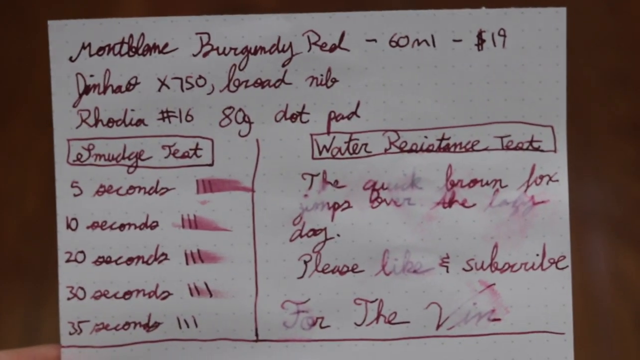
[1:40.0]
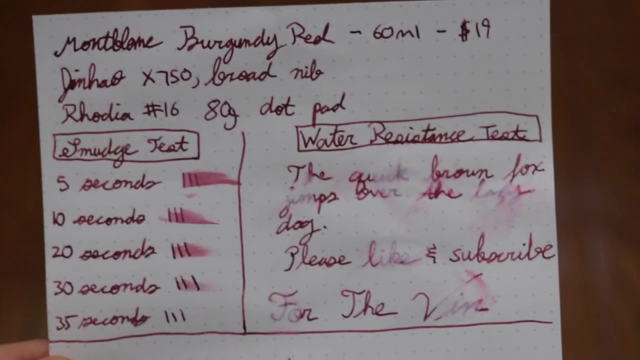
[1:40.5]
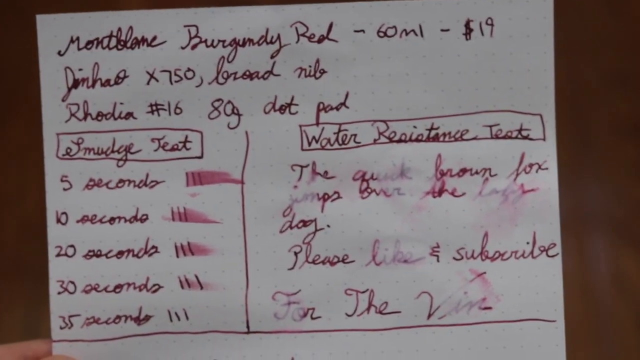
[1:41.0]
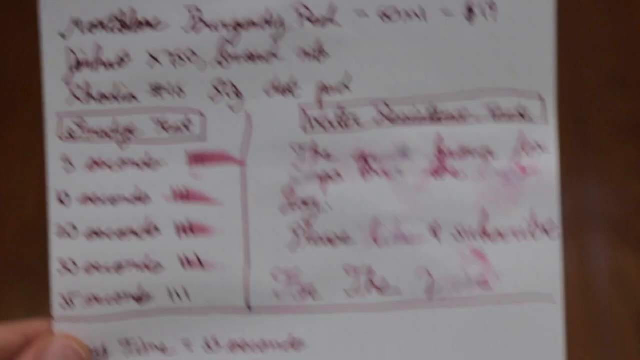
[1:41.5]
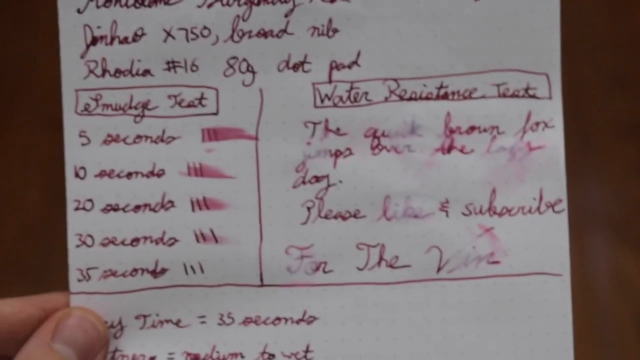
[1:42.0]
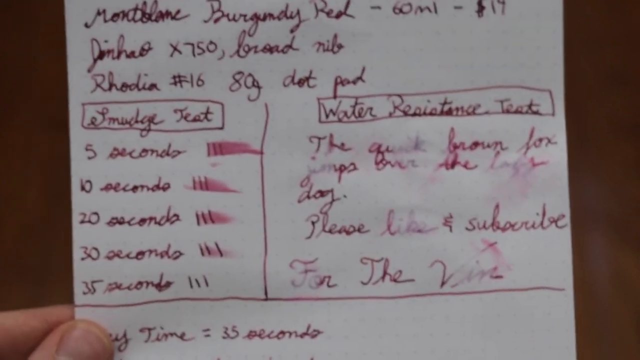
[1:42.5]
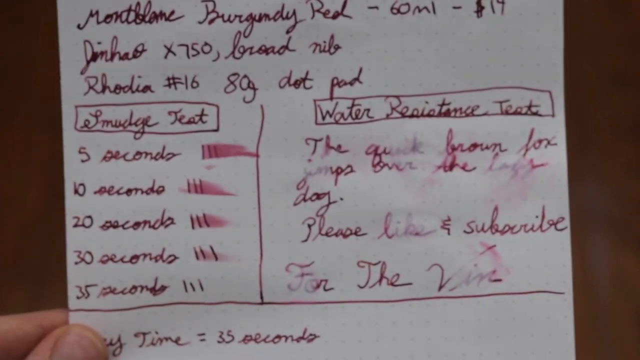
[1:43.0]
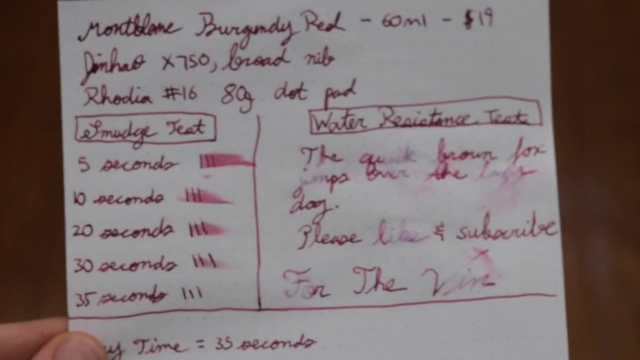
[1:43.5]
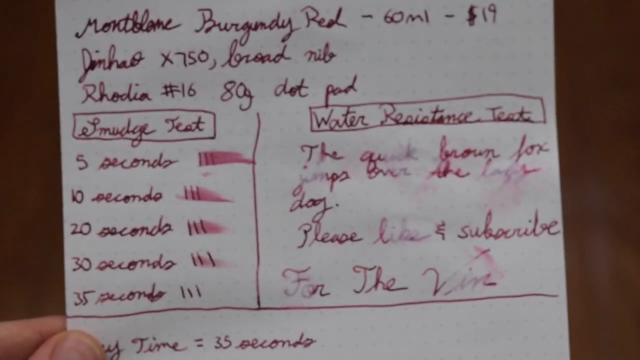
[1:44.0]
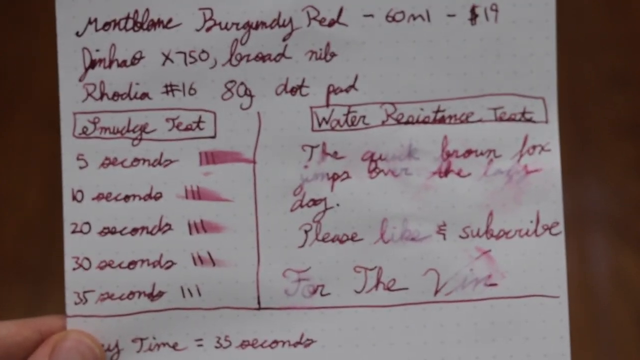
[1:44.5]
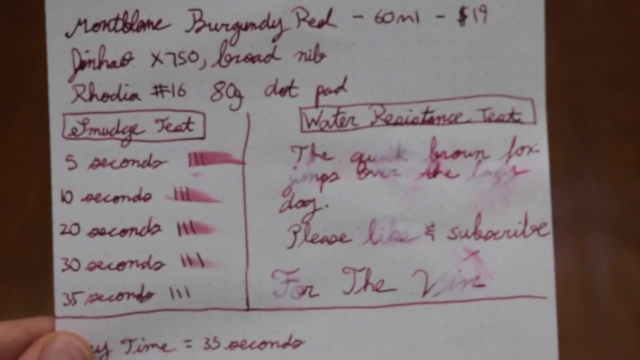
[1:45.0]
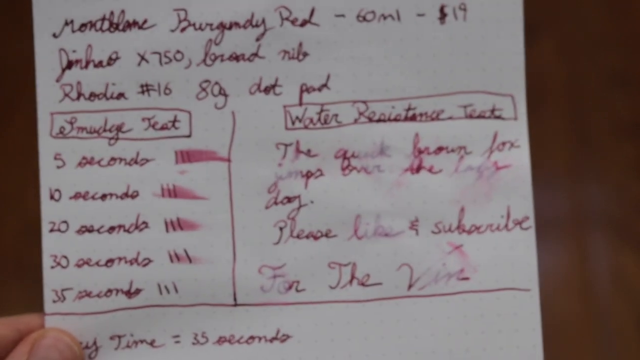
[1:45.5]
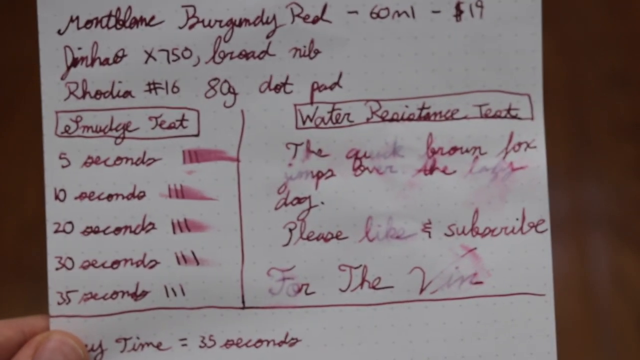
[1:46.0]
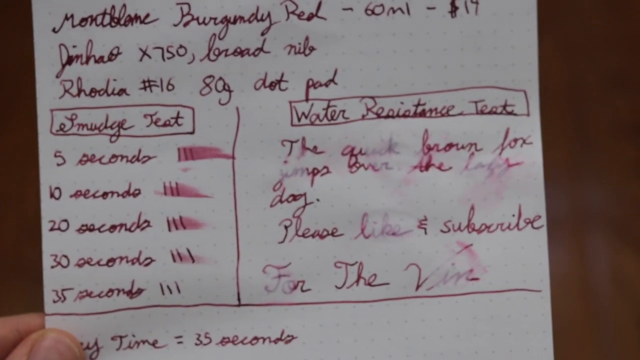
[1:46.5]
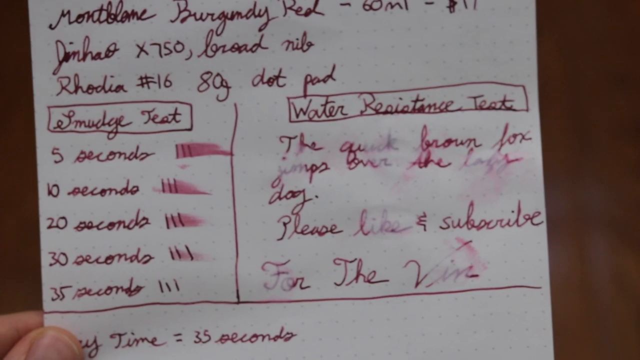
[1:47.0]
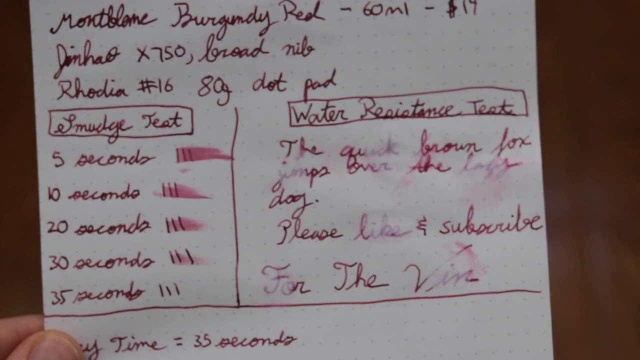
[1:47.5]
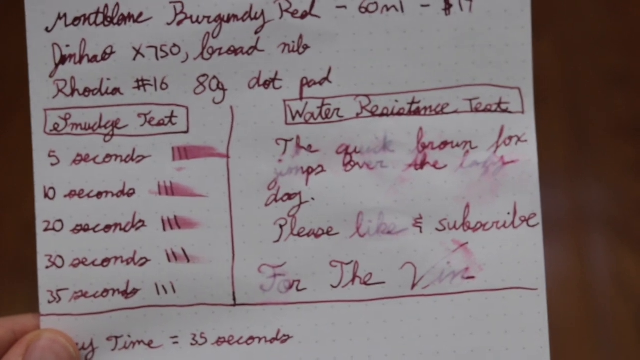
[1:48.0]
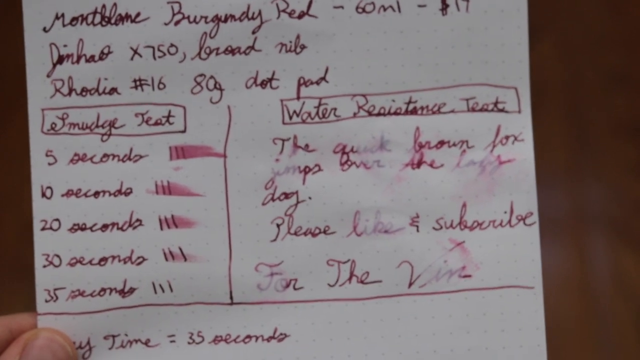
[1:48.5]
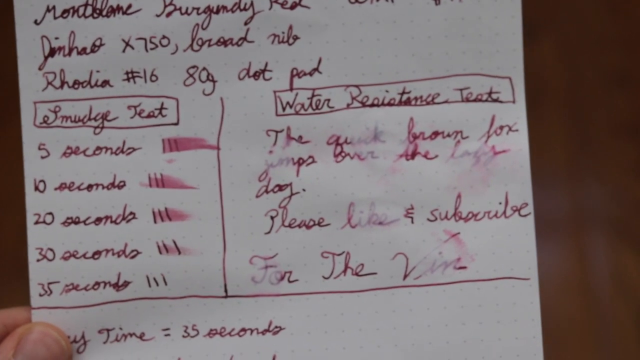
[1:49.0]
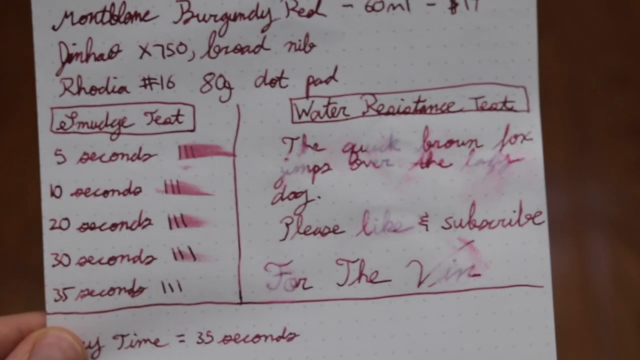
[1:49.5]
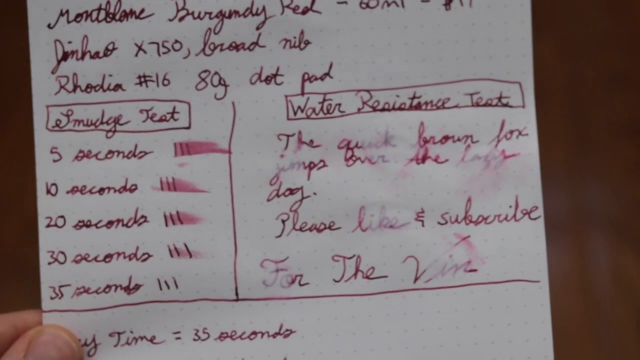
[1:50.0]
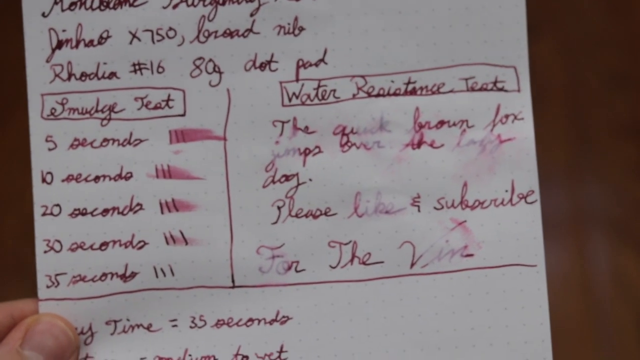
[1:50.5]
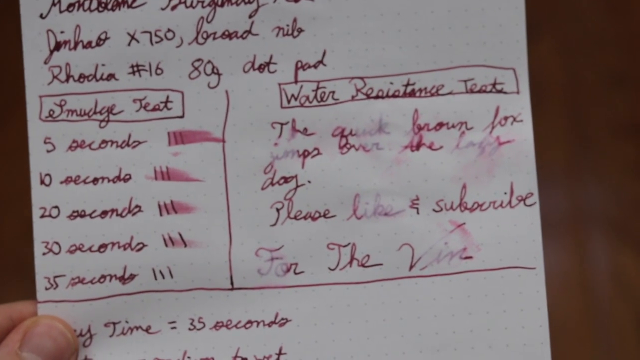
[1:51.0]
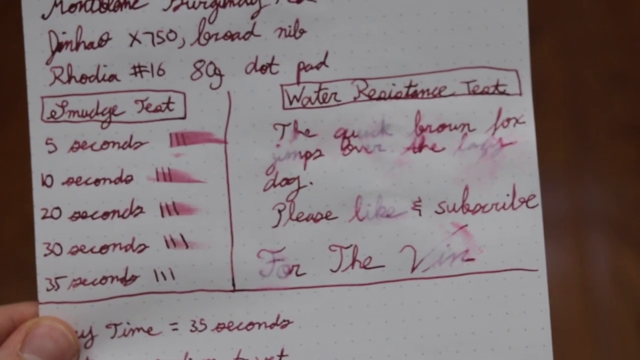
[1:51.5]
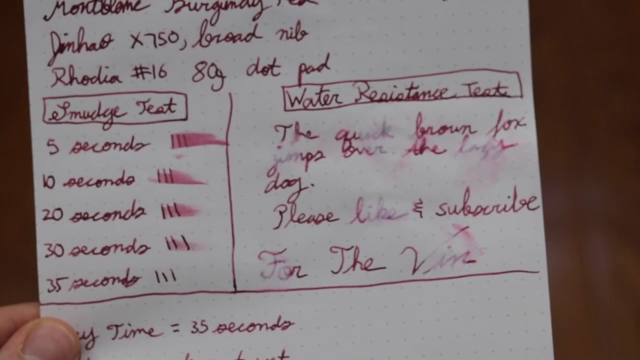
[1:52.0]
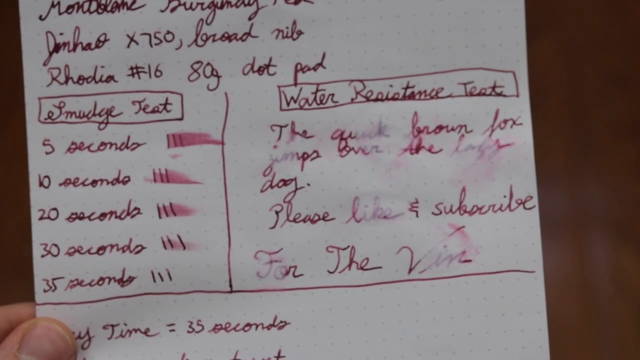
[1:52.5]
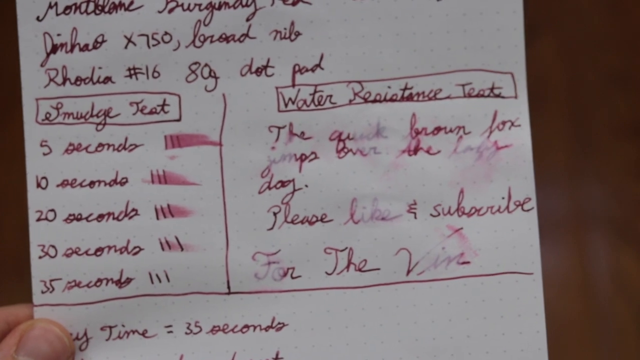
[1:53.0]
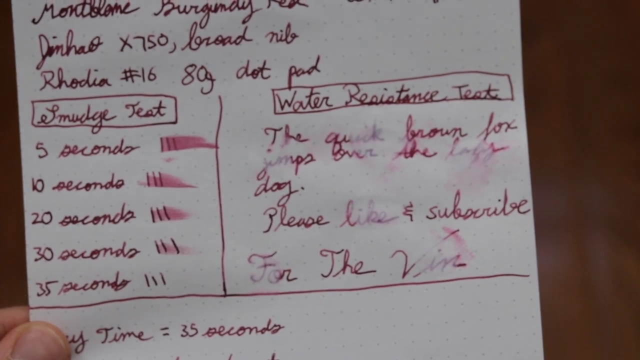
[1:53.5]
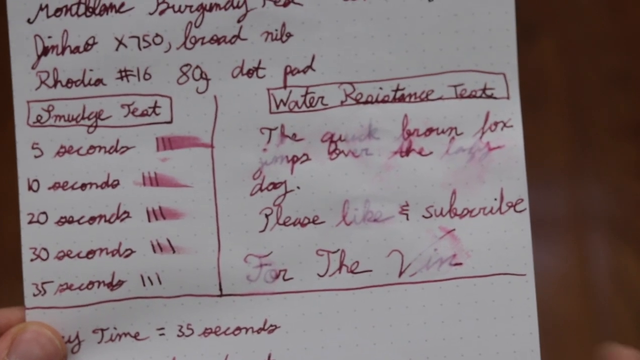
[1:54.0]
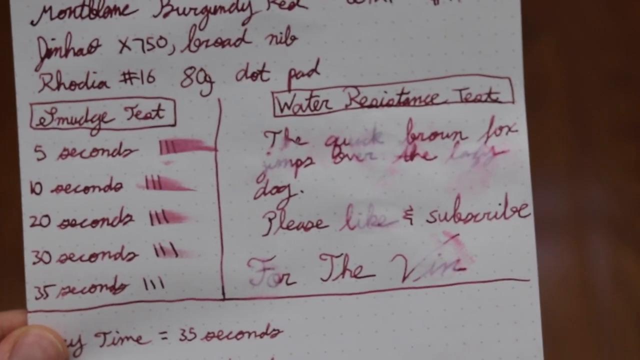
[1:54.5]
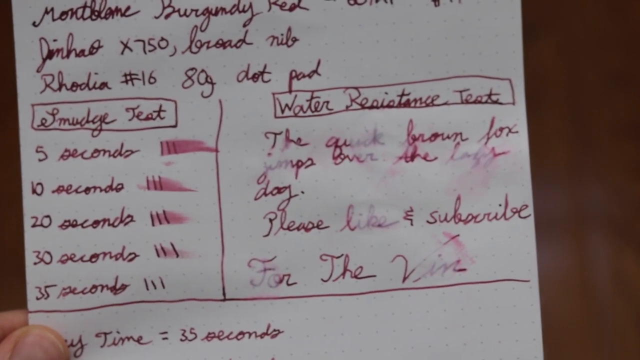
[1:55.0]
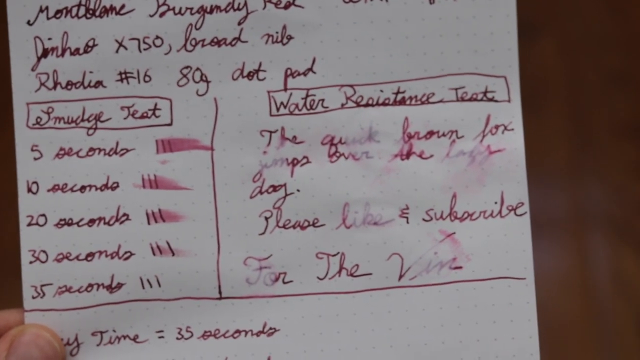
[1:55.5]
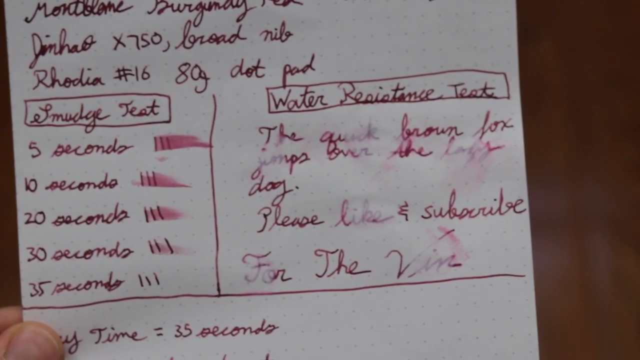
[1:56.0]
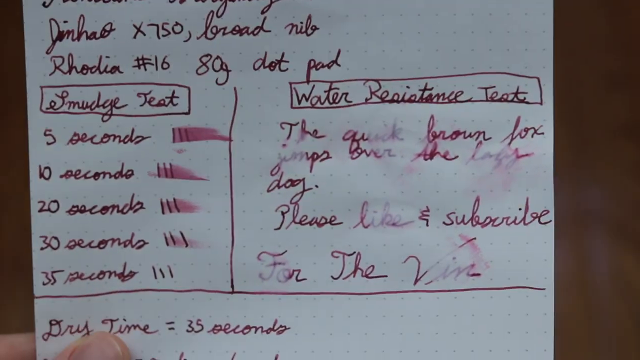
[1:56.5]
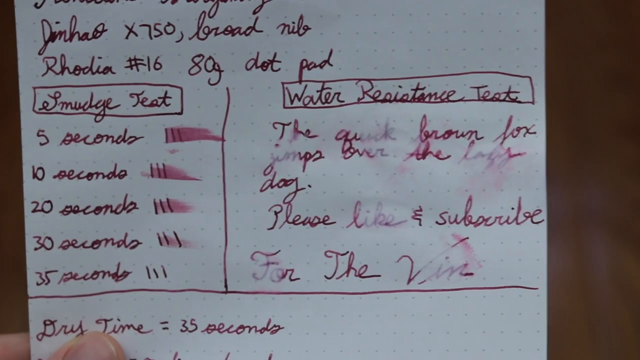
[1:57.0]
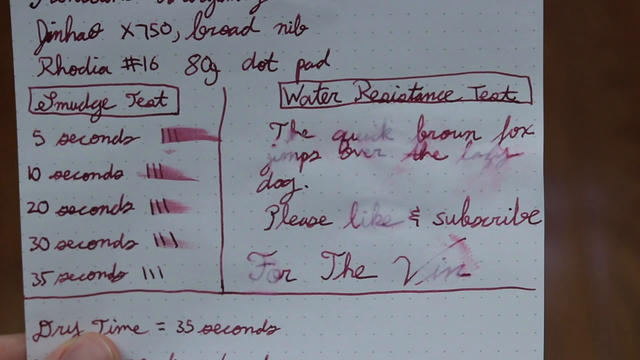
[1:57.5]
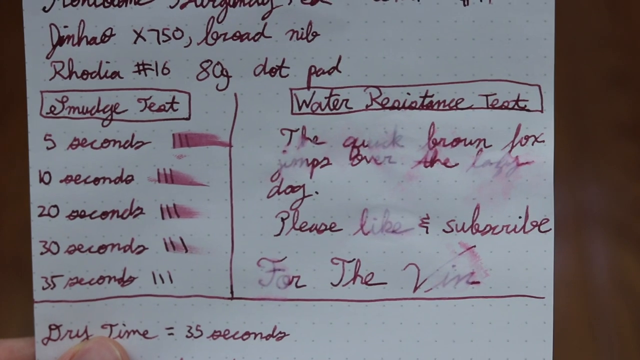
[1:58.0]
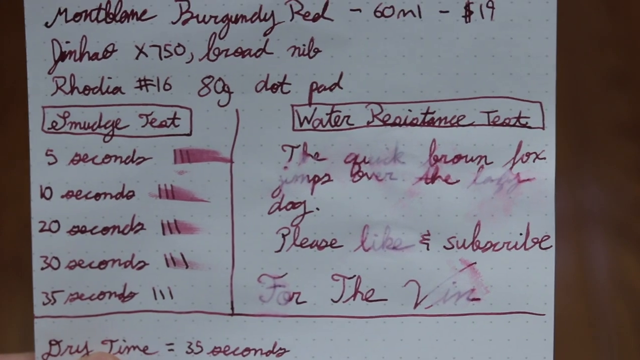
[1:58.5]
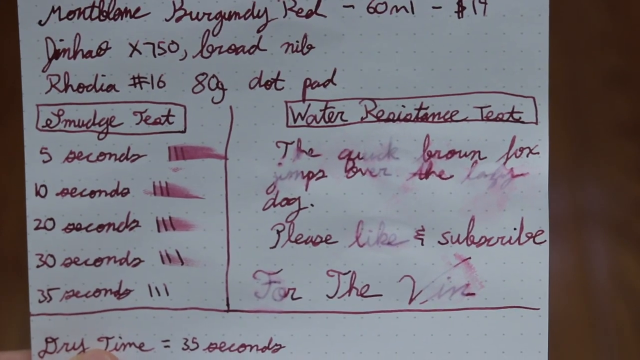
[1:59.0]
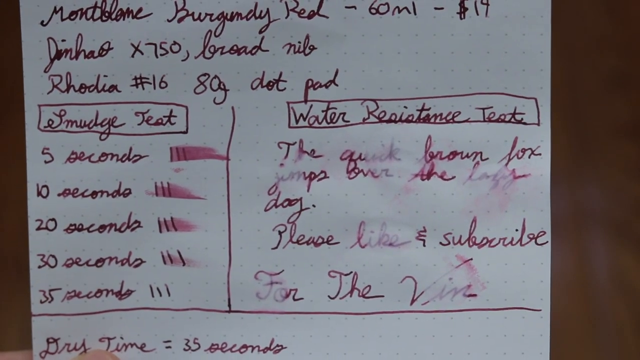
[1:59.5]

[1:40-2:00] The paper written on in burgundy red ink is shown. On the left-hand side, in a handwritten printed box, is "Smudge Test". Underneath it is "5 seconds" followed by vertical marks that appear to have been smudged; below that is a line reading "10 seconds", also with a smudge, then "20 seconds" with a smudge, "30 seconds" with a smudge, and "35 seconds" with no smudge. Three vertical lines follow each number of seconds, and the smudging appears to lessen greatly going down from 5 seconds to 35 seconds. A drawn line to the right of the smudge test separates it from the right-hand side, which has a handwritten box with "water-resistant test" written in cursive. There the sentence "The quick brown fox jumps over the lazy dog" is written, and it appears that water drops have been placed on the paper to show the ink smudging with water.